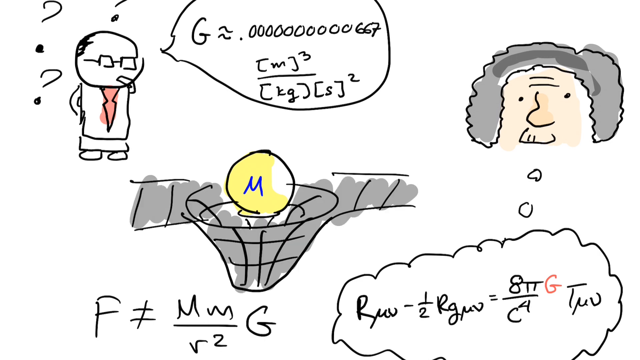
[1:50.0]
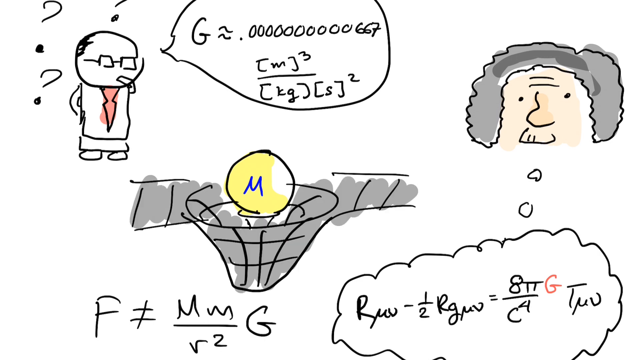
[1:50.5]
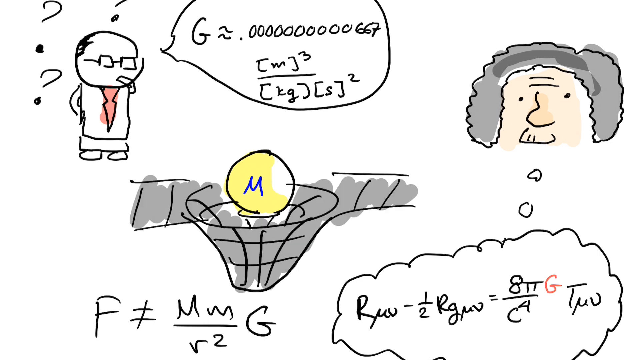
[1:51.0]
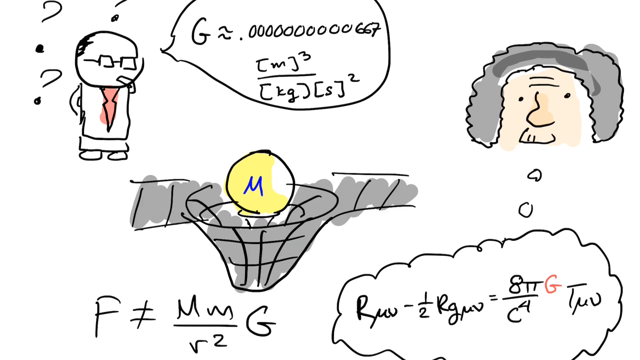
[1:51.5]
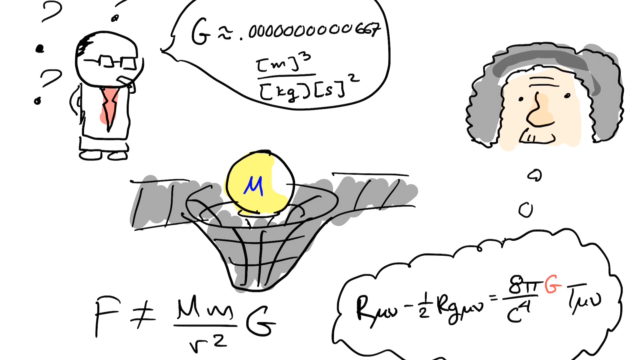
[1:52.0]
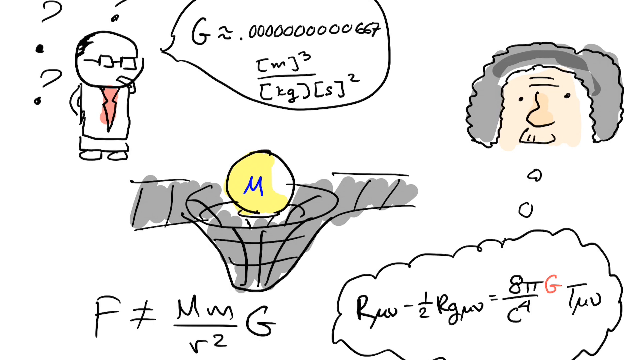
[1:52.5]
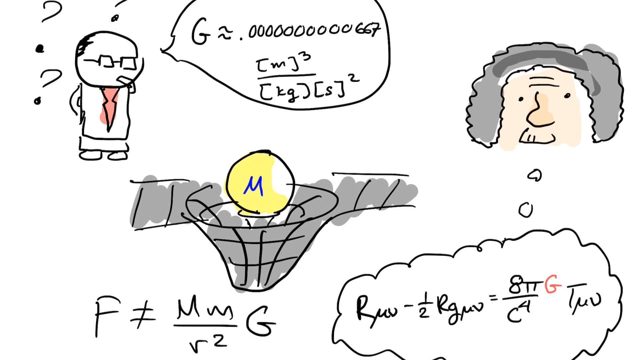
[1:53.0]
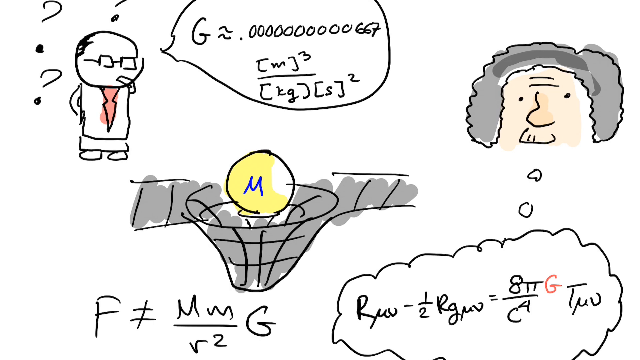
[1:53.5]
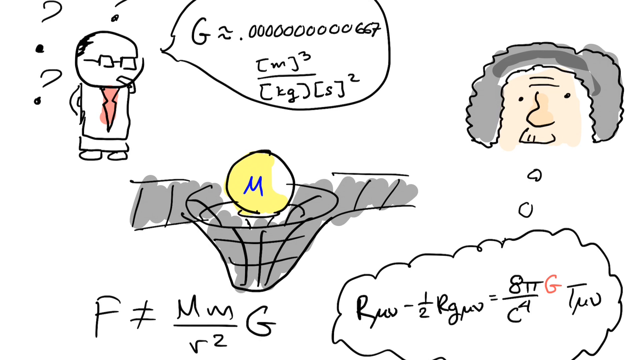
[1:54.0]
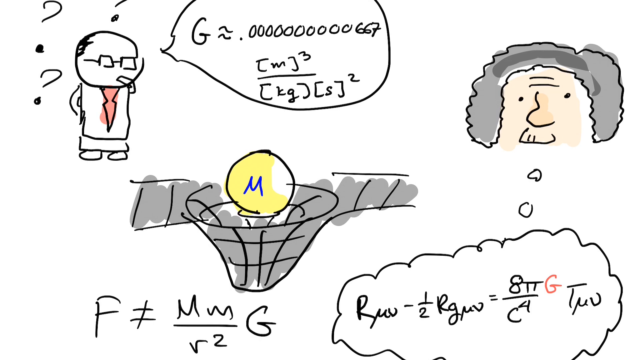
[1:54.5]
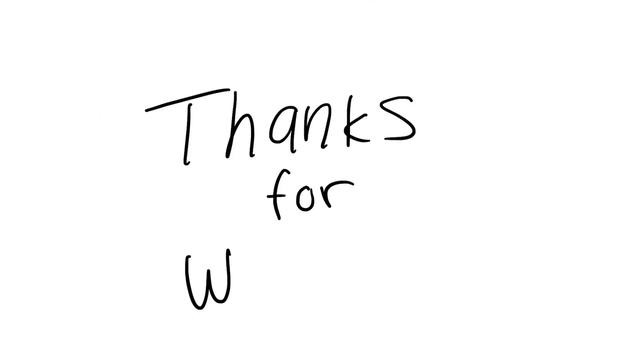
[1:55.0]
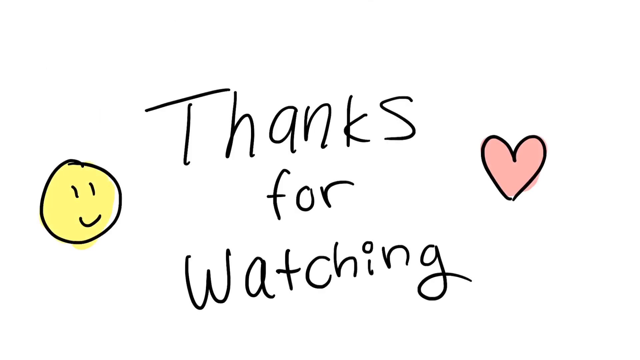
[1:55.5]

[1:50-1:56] The scientist appears with the same math equations as before, all drawn in a caricature style on a white background. He is in the upper left corner with his hands on his hips, three question marks surrounding him, and he wears a pink tie. Beneath him, toward the center of the screen, is the same sun drawing with a blue M in the center, with Mercury also represented. At the top far right is an older man who looks like he might be some kind of guru, possibly an elder, with gray frizzy long hair and a thought bubble with more mathematical equations. The sun then becomes almost like a basketball in a net, and at the end "thanks for watching" appears in written scribbles, with a happy face and a heart on each side.